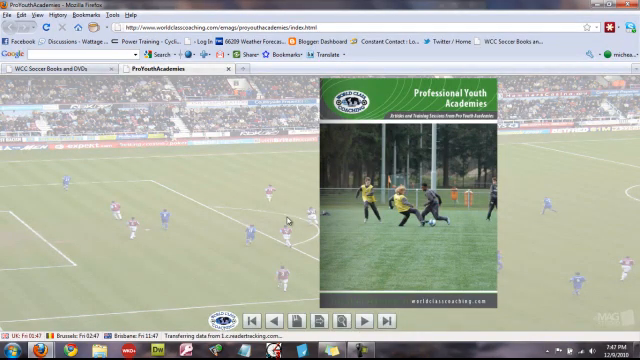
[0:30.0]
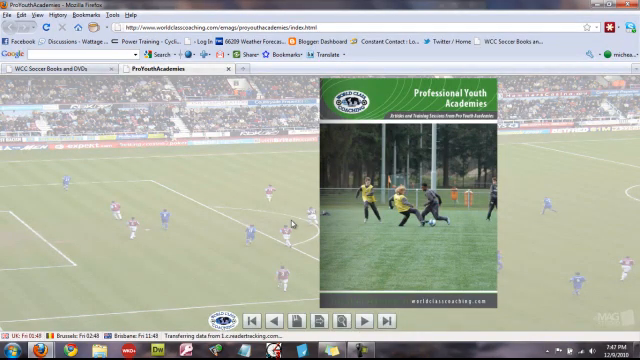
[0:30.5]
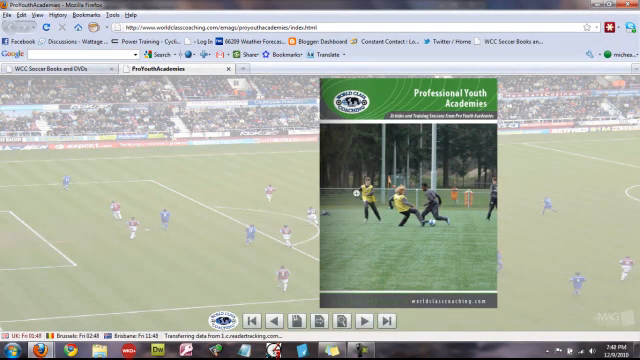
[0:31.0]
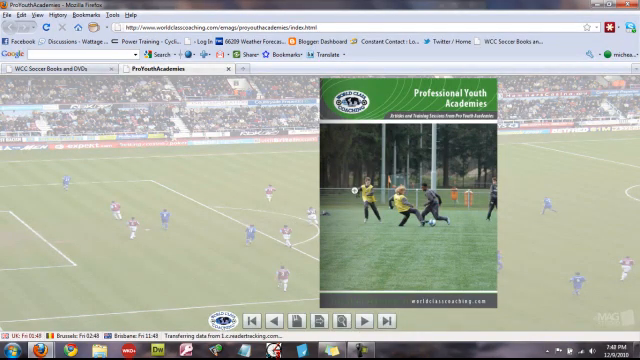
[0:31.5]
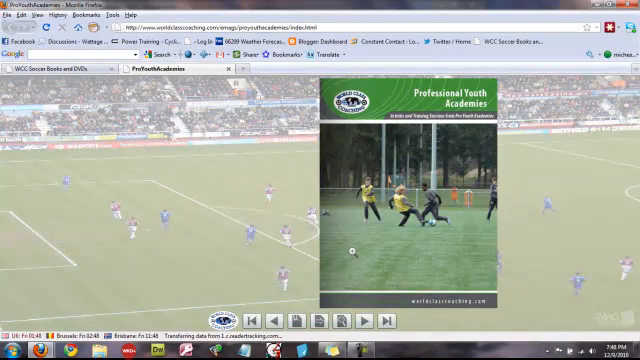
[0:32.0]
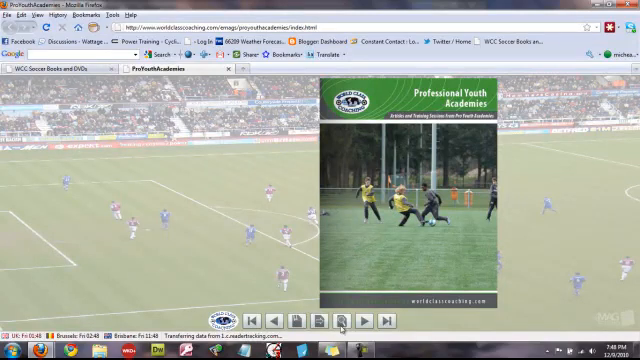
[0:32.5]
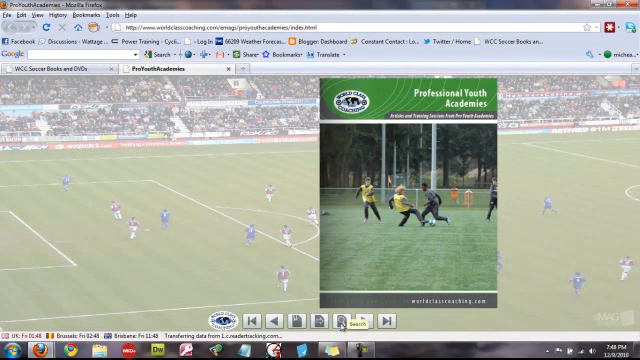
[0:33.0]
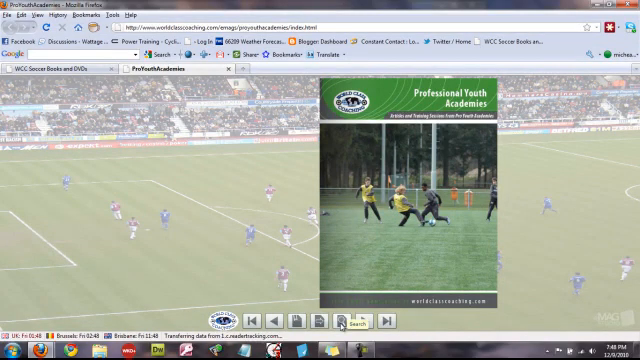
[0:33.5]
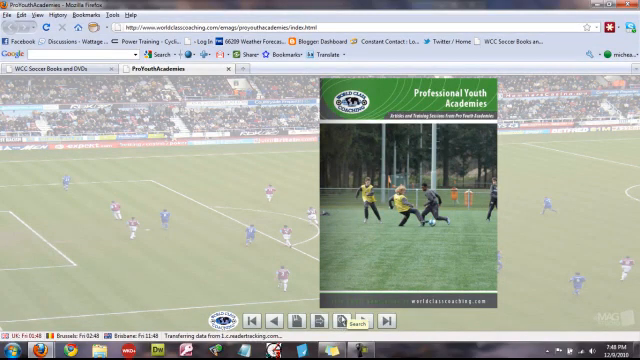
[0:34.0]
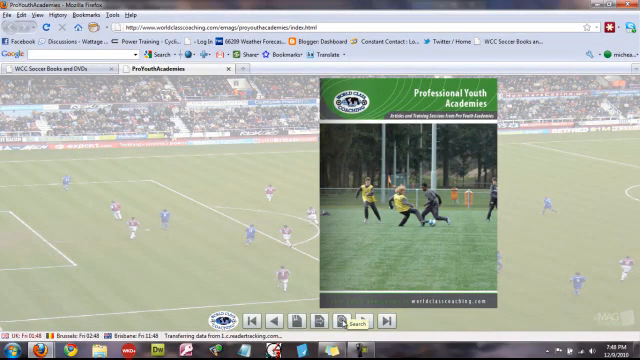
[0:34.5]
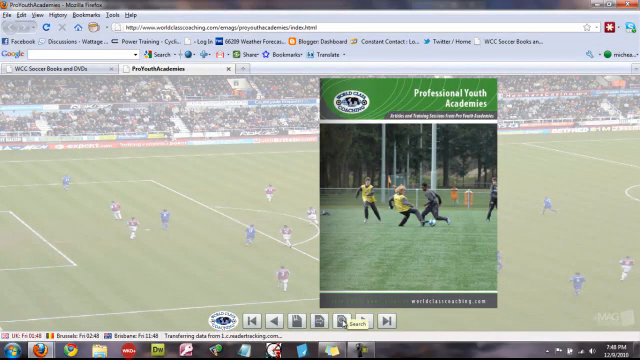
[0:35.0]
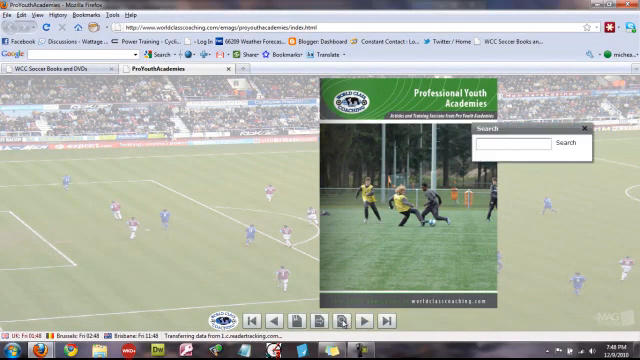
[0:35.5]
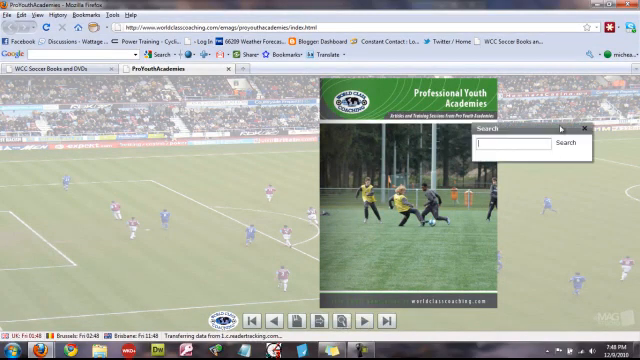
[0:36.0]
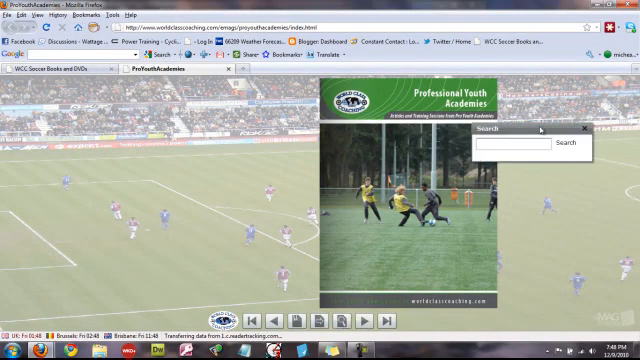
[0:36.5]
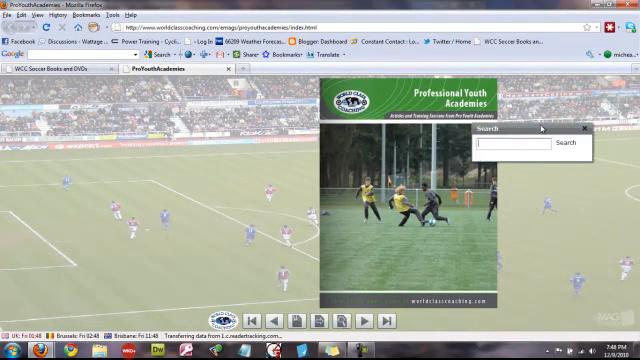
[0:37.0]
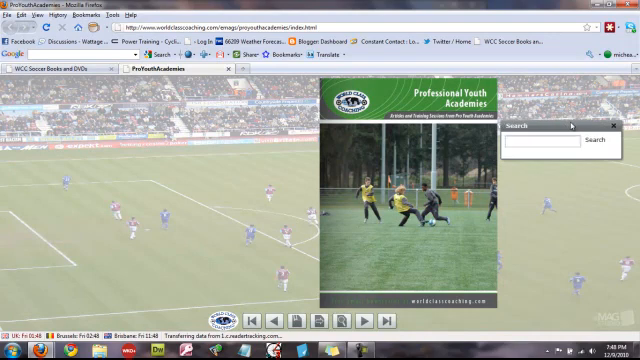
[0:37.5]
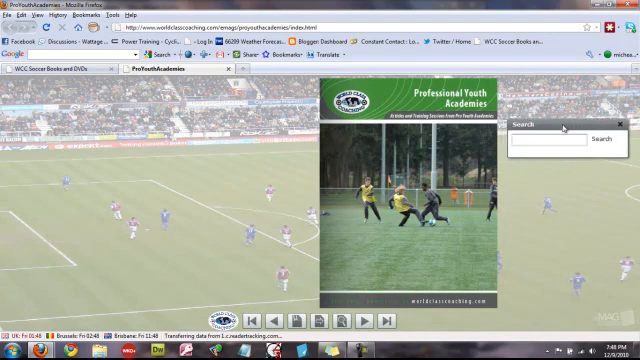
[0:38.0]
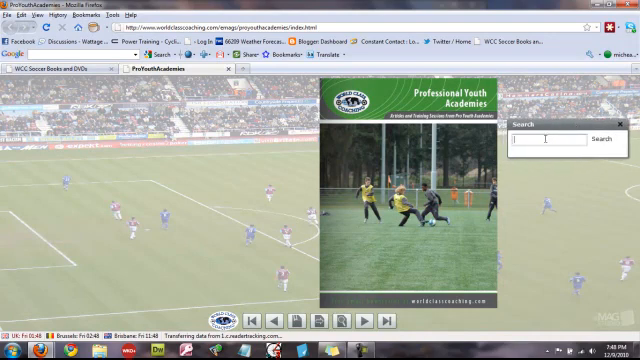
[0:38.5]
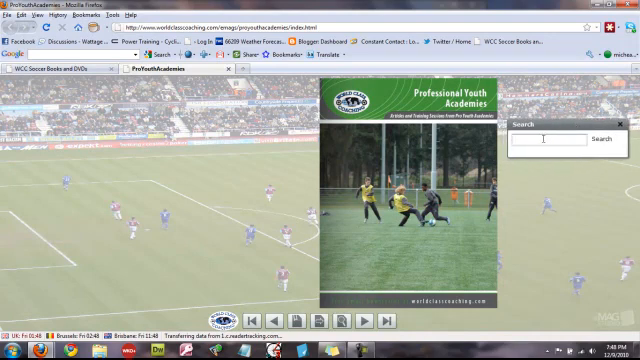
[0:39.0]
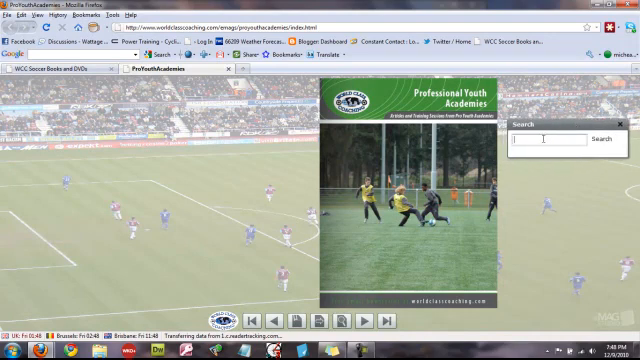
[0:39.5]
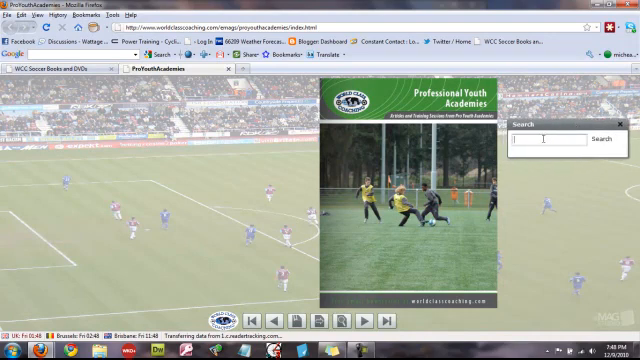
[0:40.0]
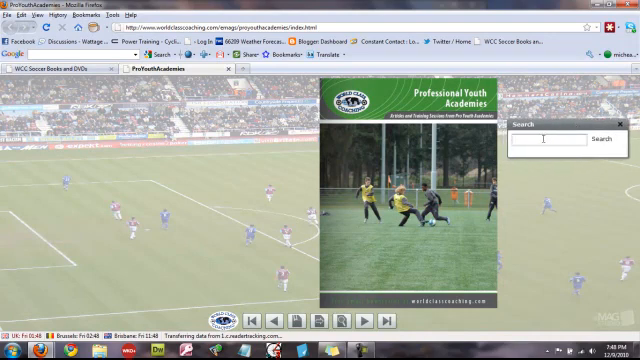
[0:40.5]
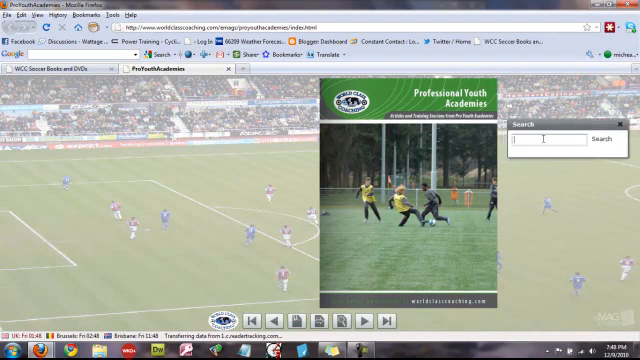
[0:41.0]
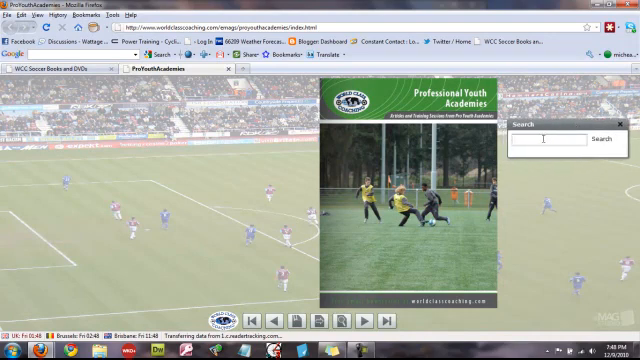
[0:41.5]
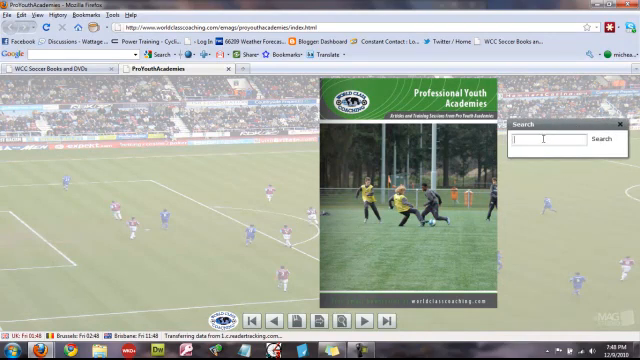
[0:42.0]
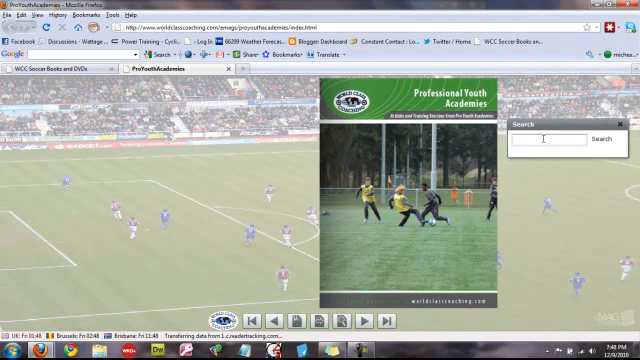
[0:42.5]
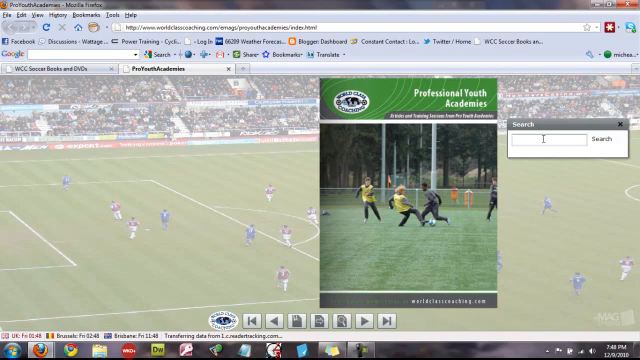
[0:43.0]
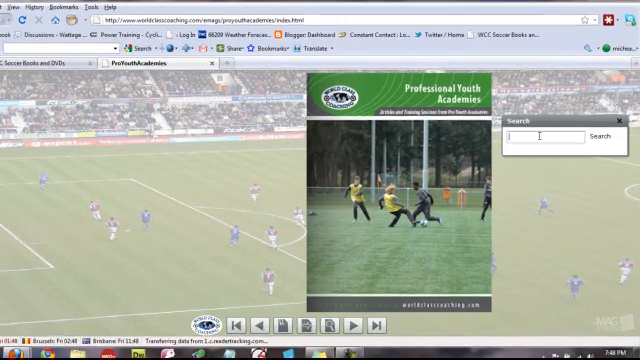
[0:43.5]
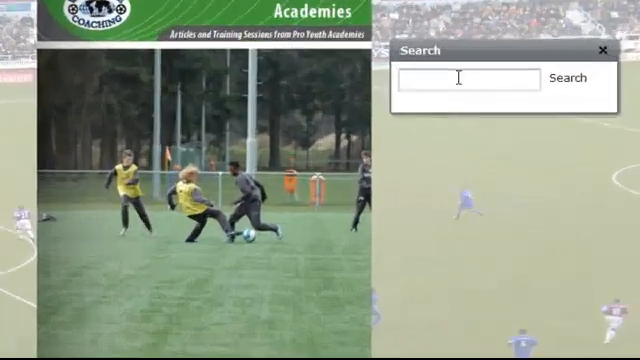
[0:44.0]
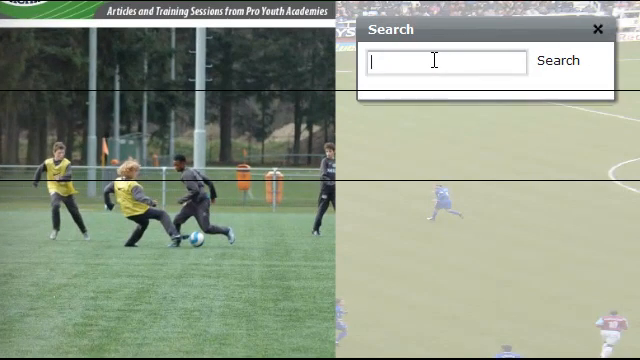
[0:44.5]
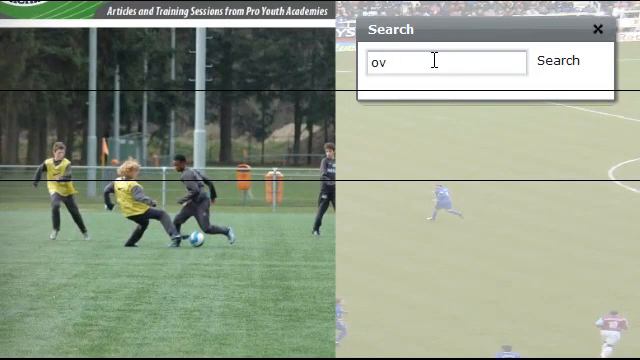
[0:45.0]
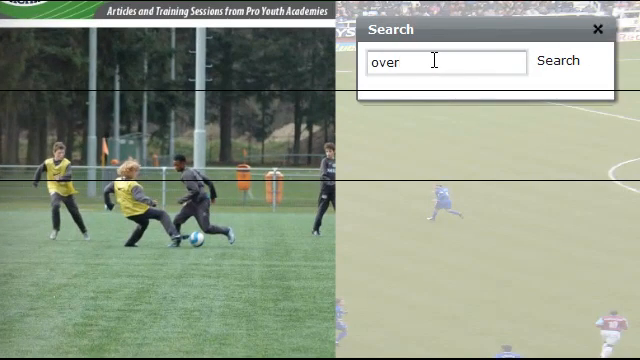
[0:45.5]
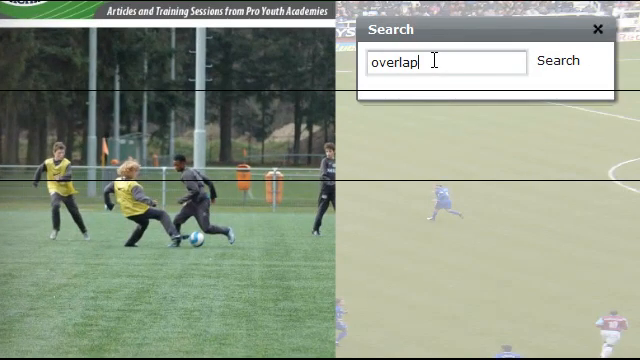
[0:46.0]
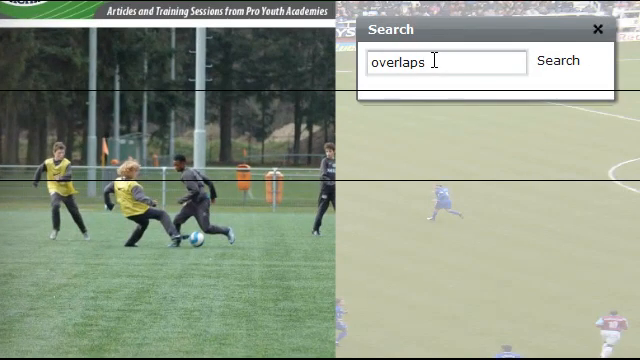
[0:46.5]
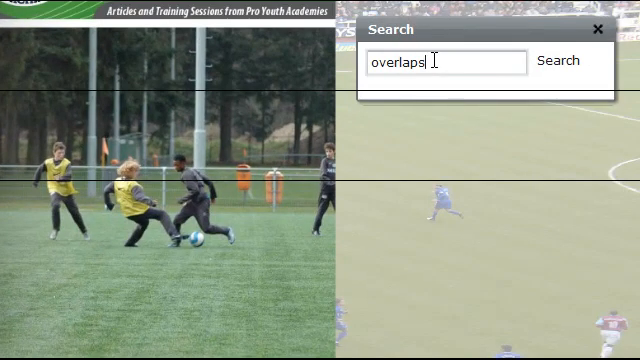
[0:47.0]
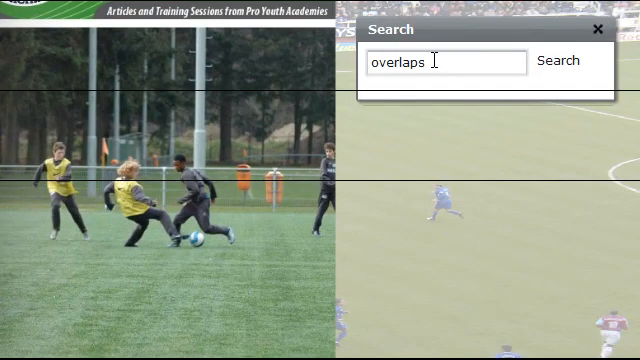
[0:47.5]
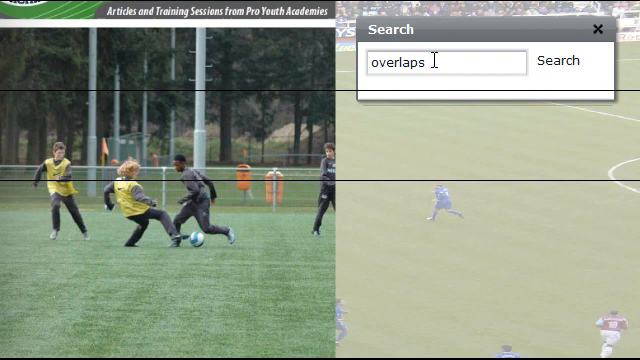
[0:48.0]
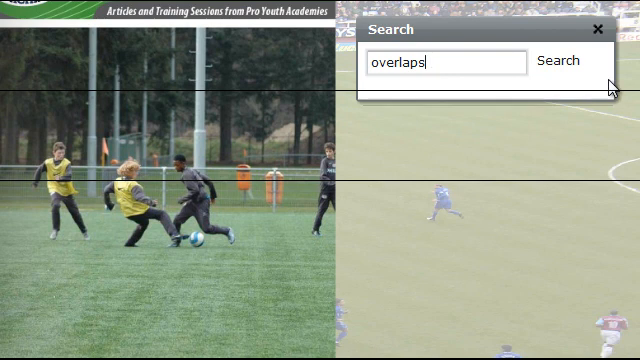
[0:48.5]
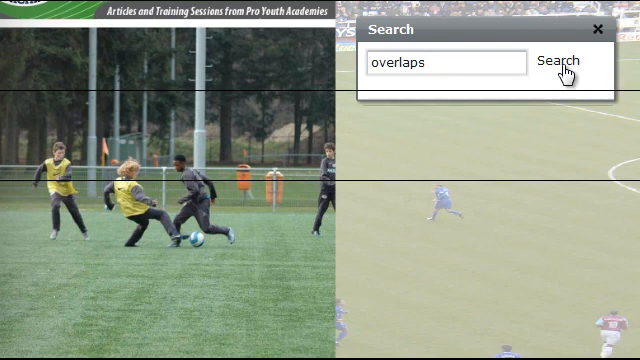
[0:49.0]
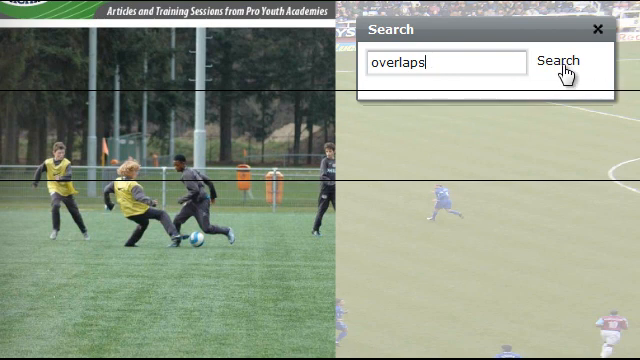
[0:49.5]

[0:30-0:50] An image of a DVD with soccer players on it is shown on a web page. One person wears what looks like a yellow vest, a gray long-sleeved shirt and black pants. He is sort of leaning backwards, facing the right side of the screen, with his arms slightly bent and both his left and right arms kind of out to the side. He appears to be kicking the soccer ball with his left foot; his knee is sort of out horizontally and his lower leg goes down toward the bottom right of the screen. In the background is a soccer field with several soccer players on it. The mouse pointer clicks a search icon at the bottom, and a search bar pops up in the middle right of the screen. The pointer clicks in it, "overlaps" is typed into the search bar, and the finger pointer goes to "search" and clicks it.